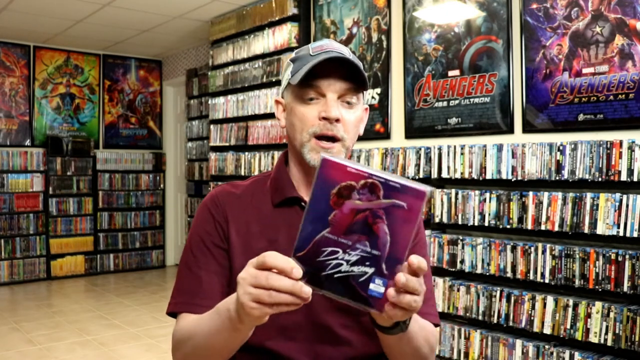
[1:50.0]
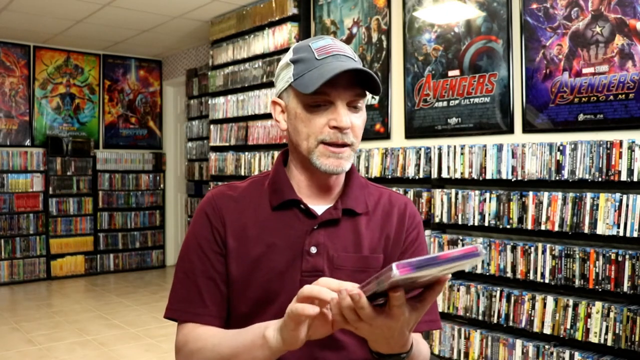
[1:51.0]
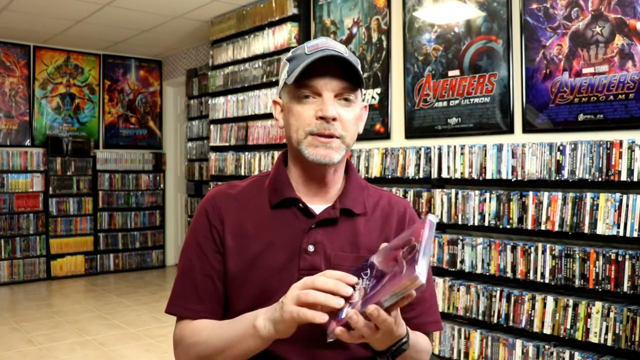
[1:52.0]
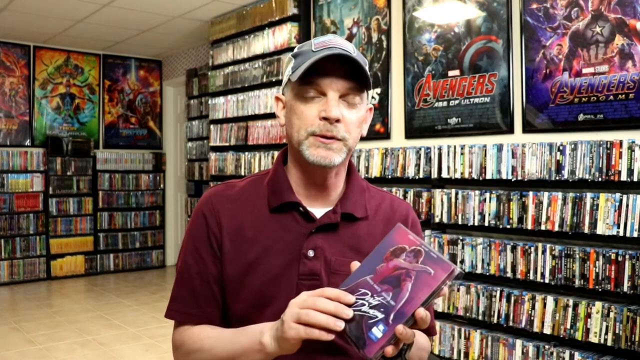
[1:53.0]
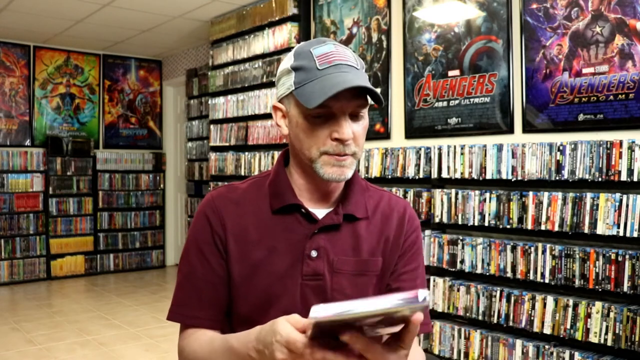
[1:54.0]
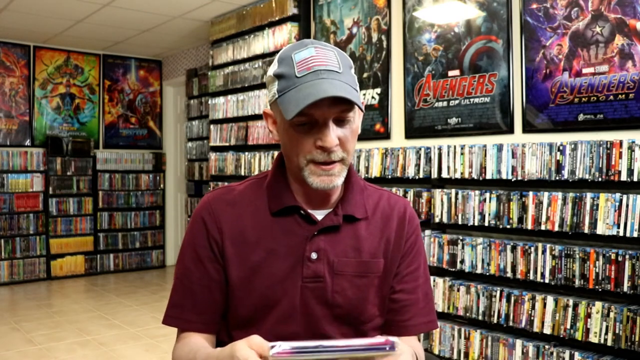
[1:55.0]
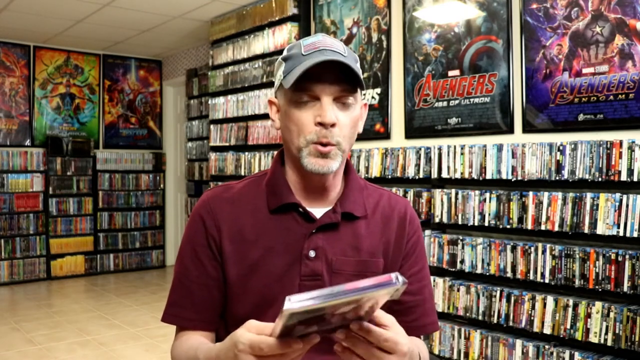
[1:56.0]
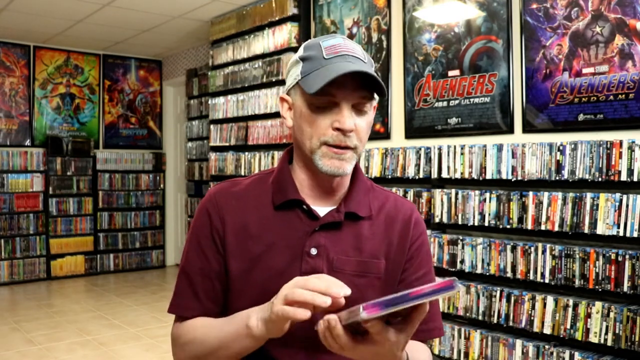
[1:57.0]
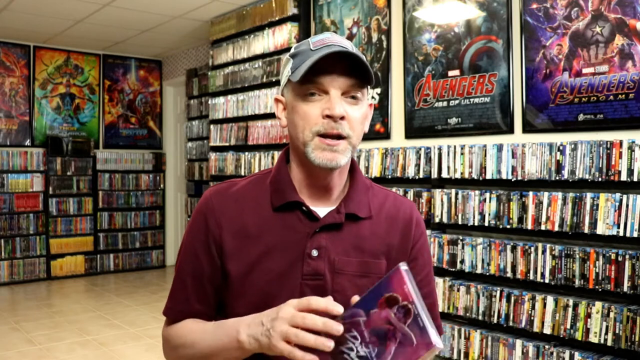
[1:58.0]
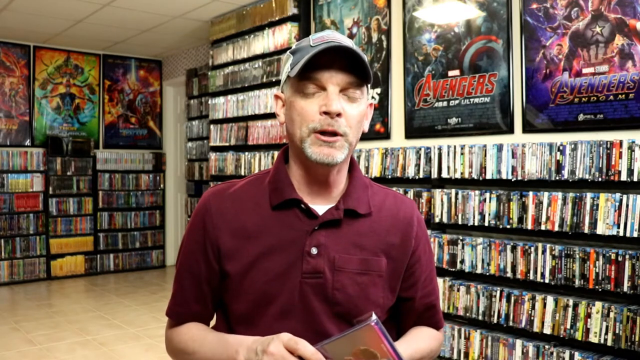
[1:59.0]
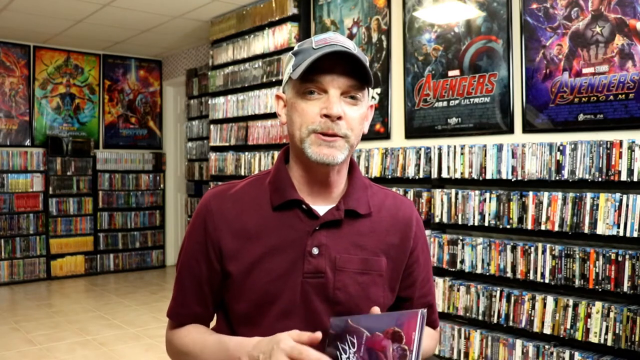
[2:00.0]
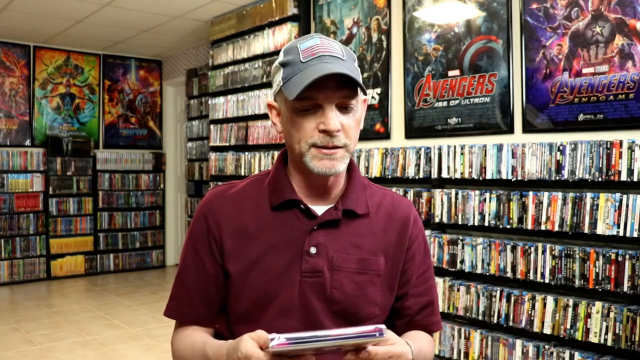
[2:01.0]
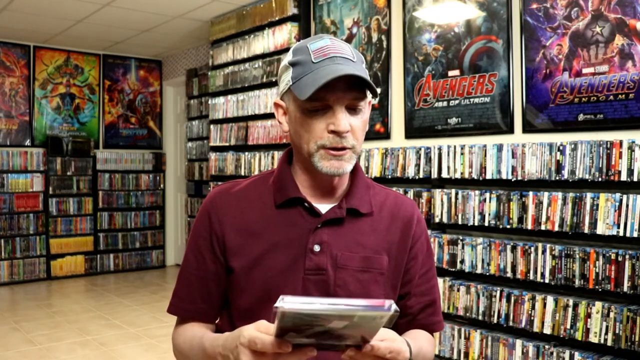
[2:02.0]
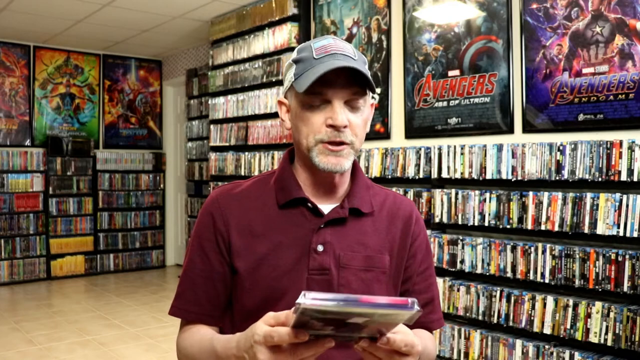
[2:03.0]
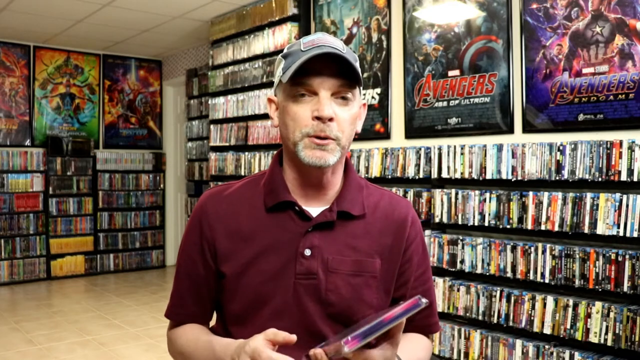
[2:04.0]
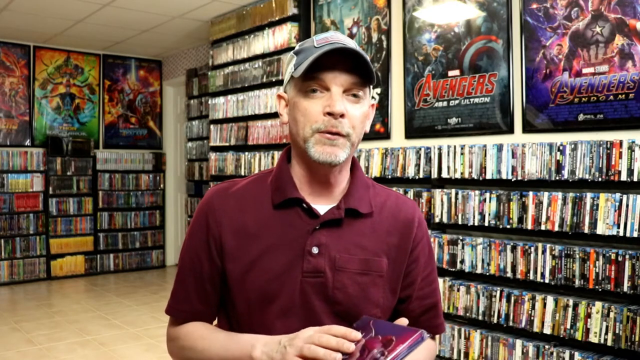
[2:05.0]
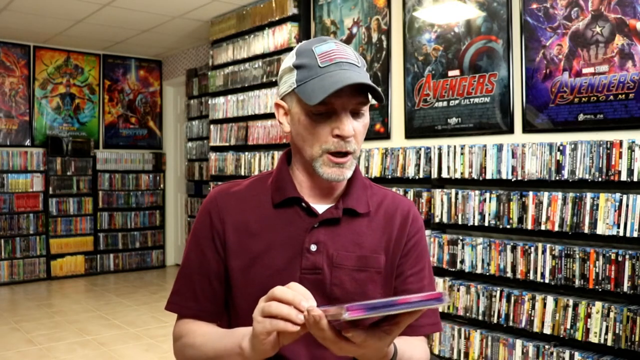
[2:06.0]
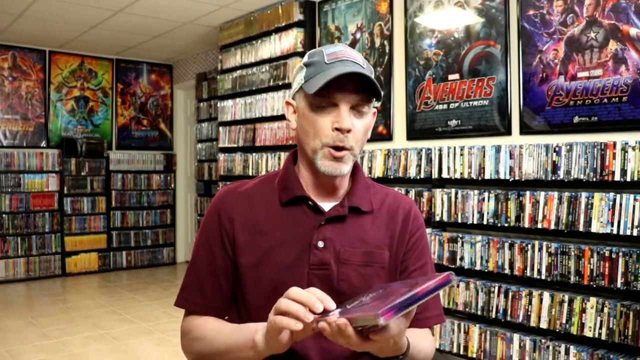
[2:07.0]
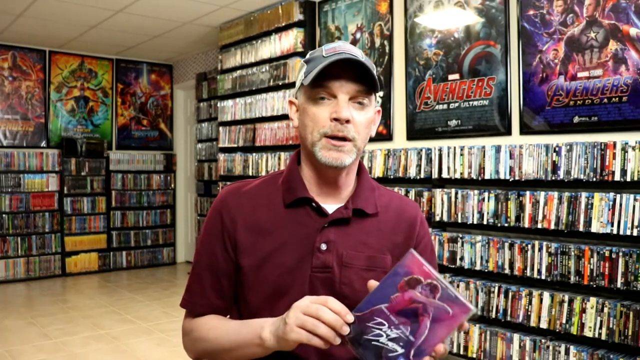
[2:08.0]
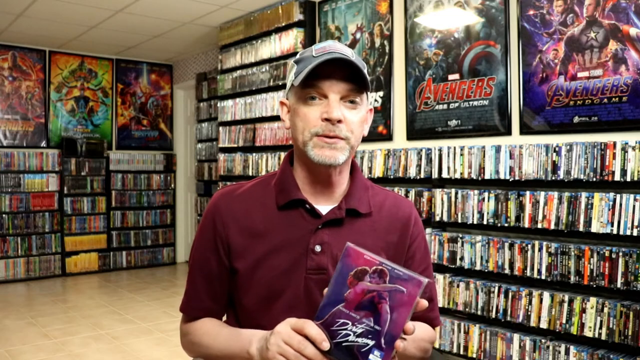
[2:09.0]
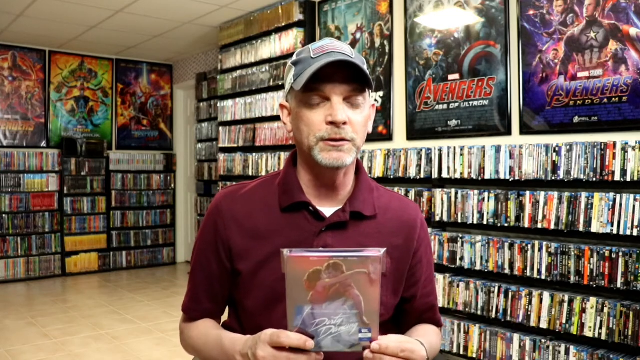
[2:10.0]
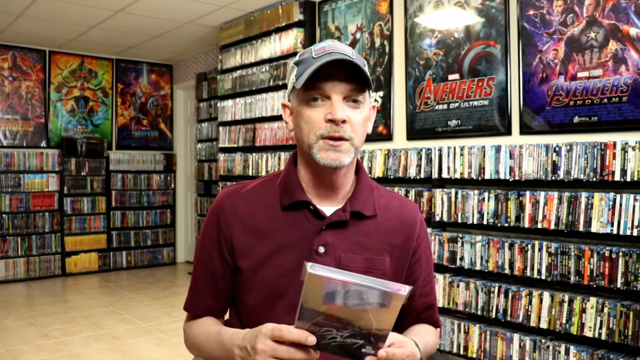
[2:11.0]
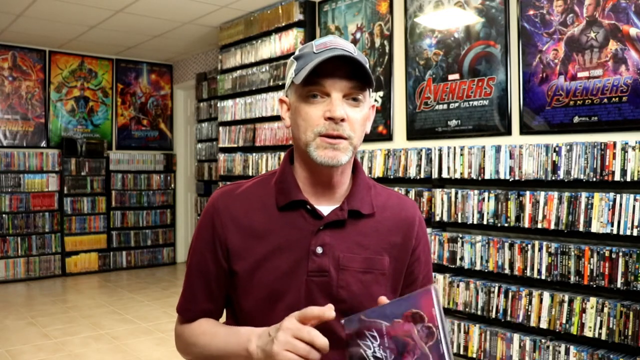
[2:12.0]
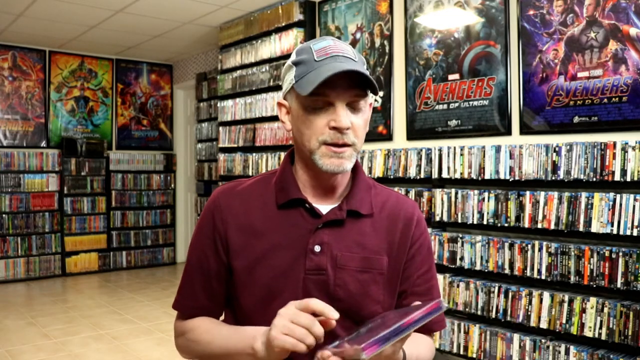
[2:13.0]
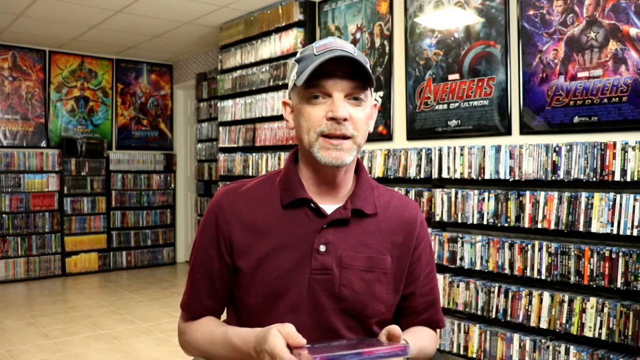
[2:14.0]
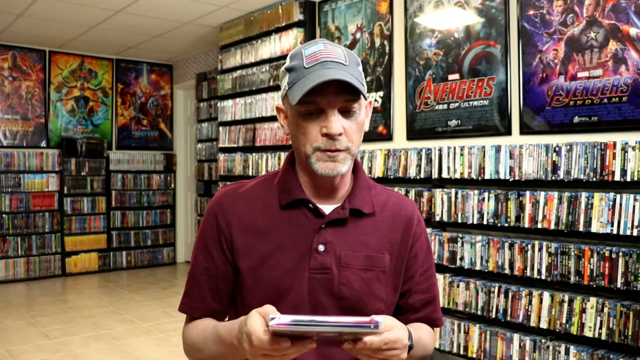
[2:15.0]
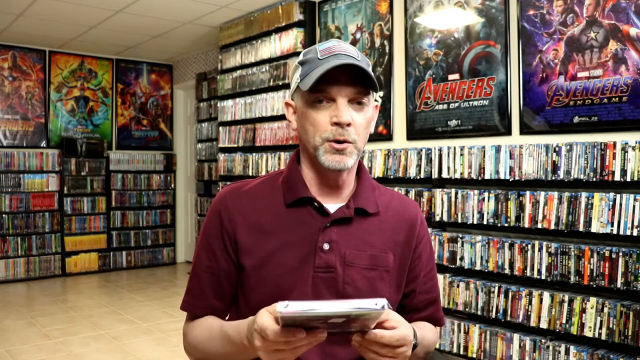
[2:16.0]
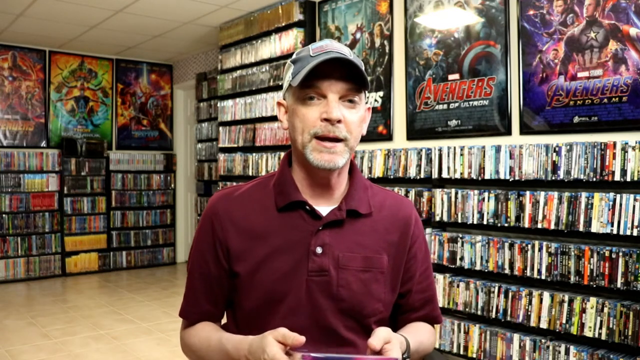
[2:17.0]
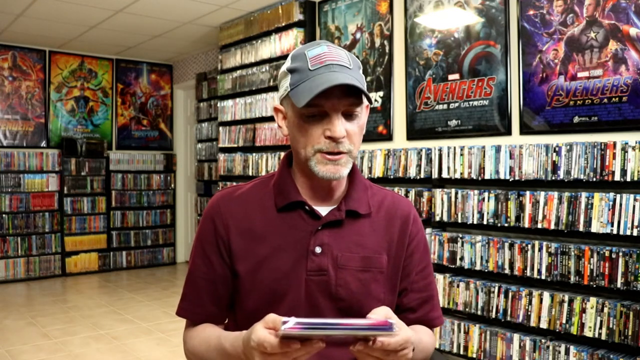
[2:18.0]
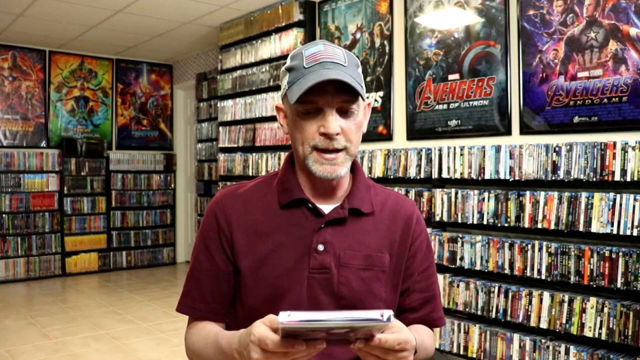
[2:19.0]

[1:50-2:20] The man turns the case around, looking at it while talking and shifting it back and forth. He rotates the case to show the front to the camera, pointing and tapping on it as if emphasizing something, then wobbles the case a little, examining and shaking it. Little changes visually besides his actions.